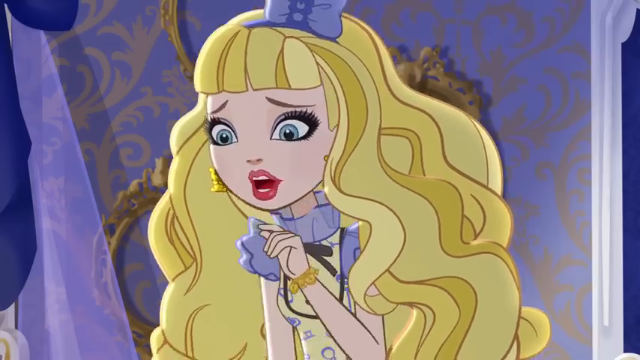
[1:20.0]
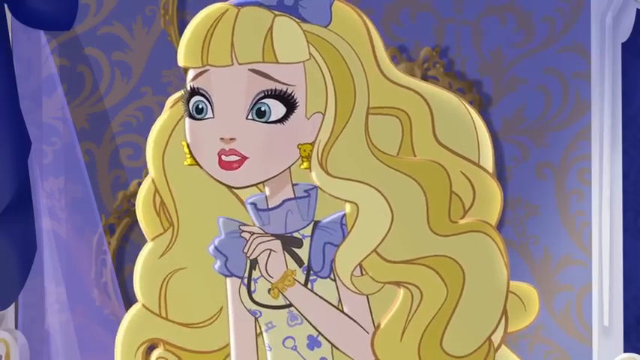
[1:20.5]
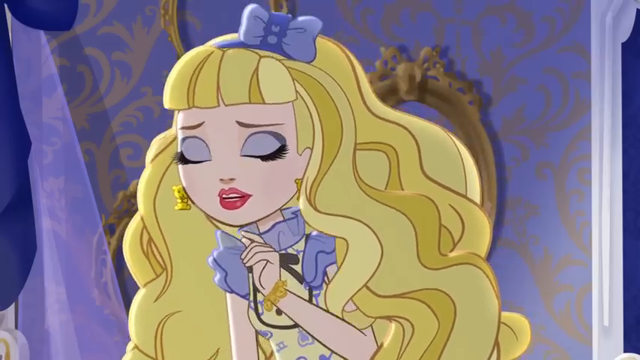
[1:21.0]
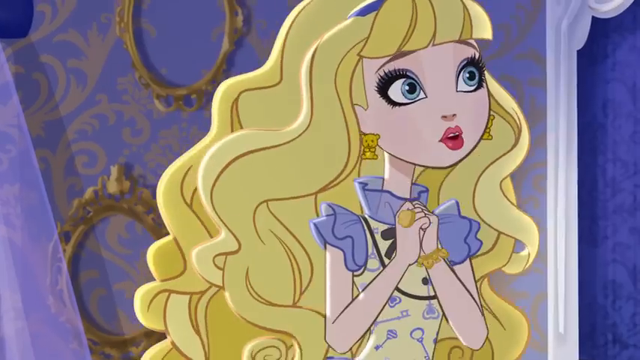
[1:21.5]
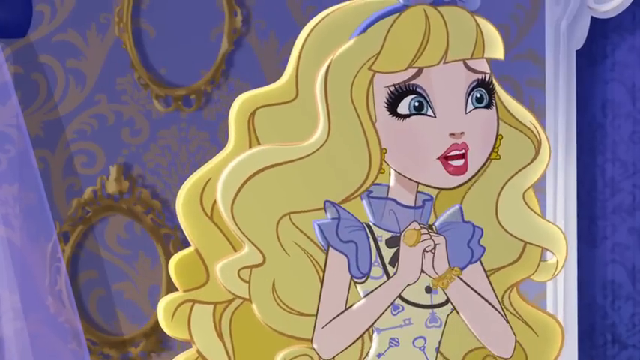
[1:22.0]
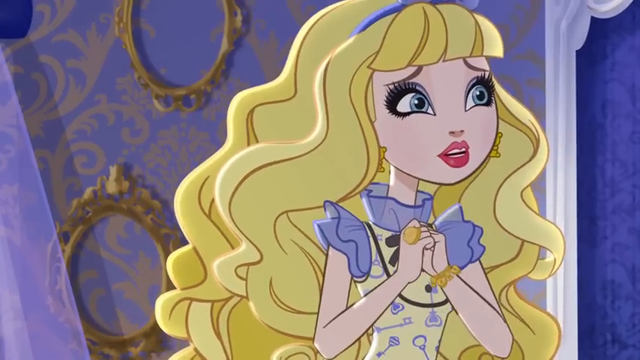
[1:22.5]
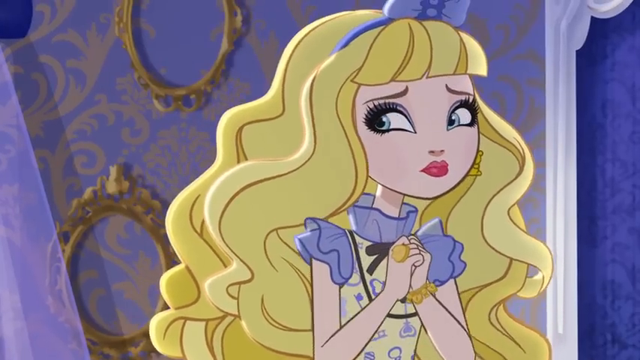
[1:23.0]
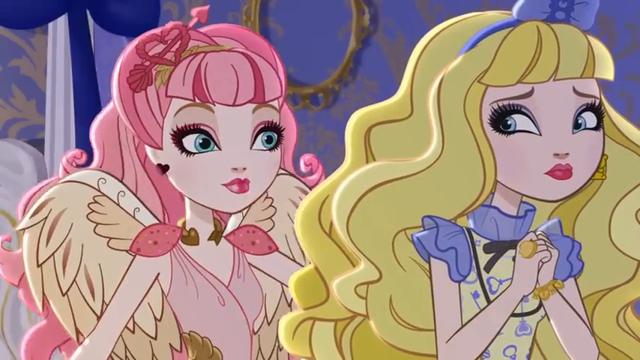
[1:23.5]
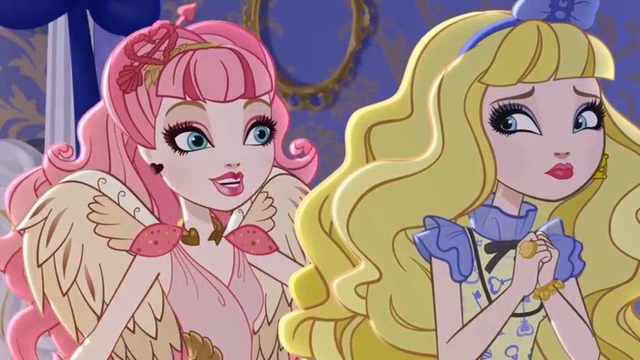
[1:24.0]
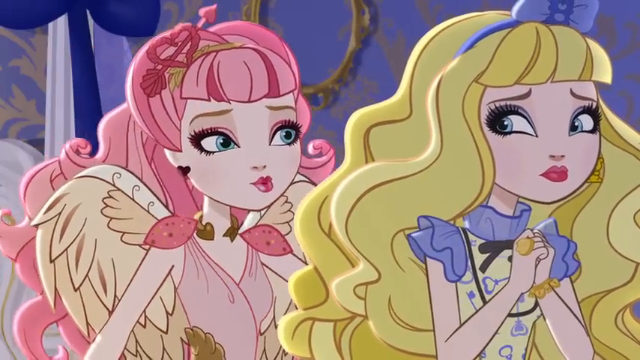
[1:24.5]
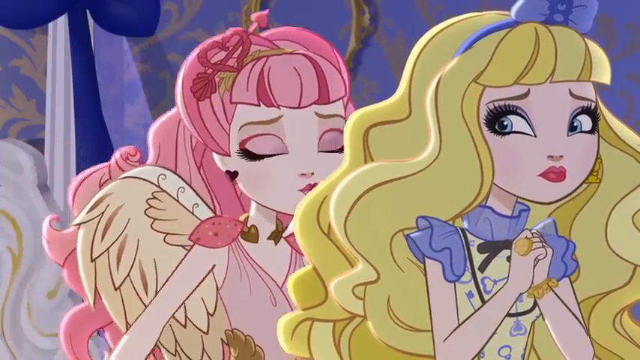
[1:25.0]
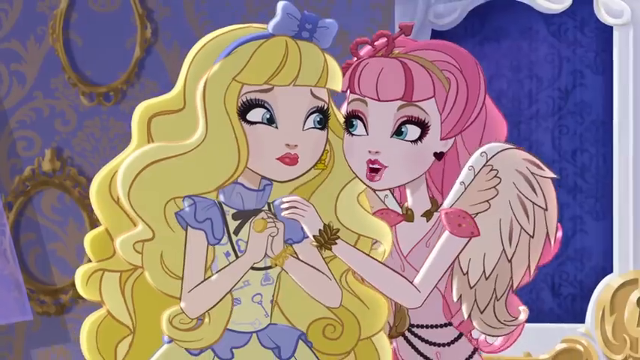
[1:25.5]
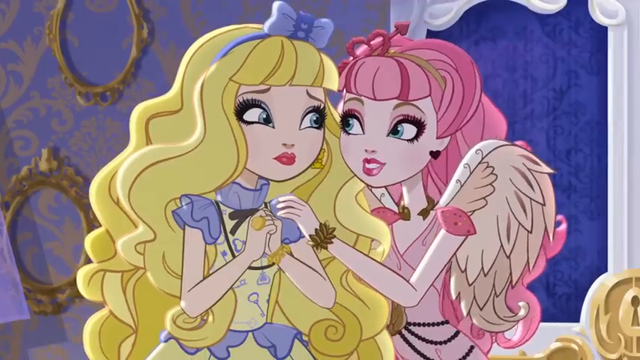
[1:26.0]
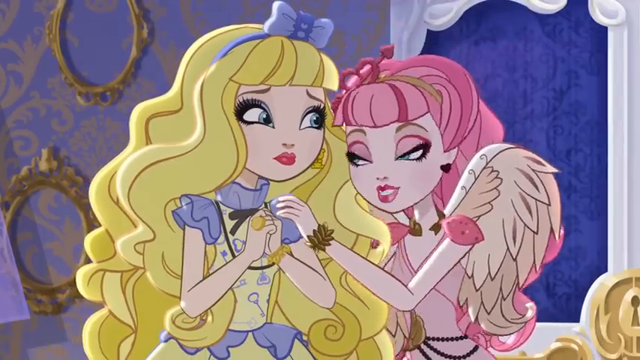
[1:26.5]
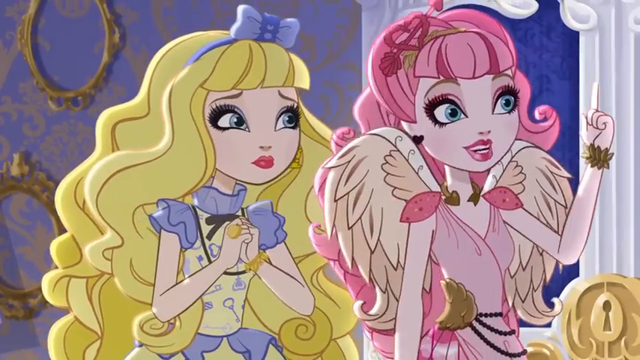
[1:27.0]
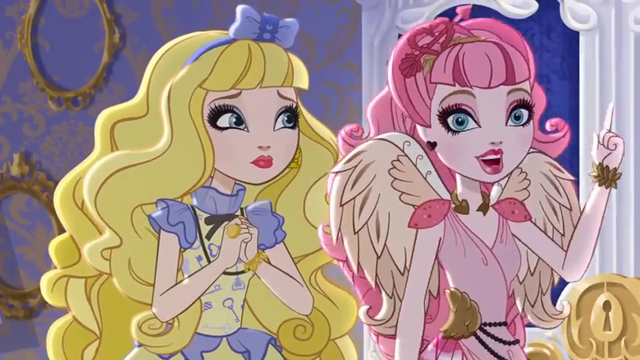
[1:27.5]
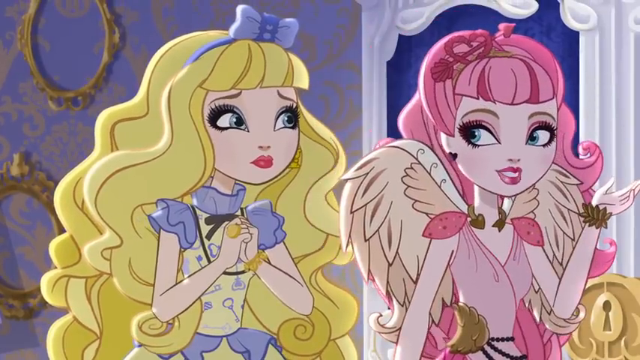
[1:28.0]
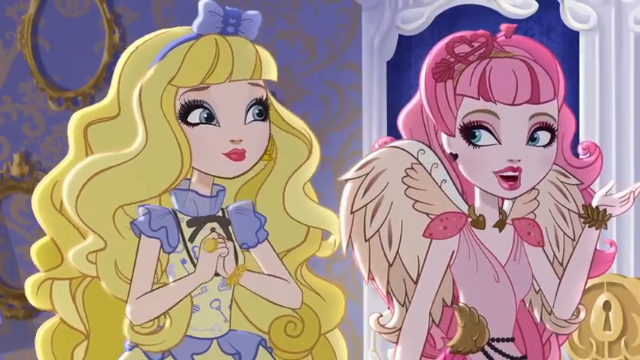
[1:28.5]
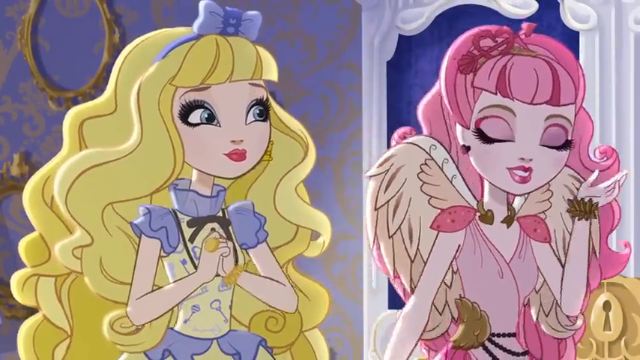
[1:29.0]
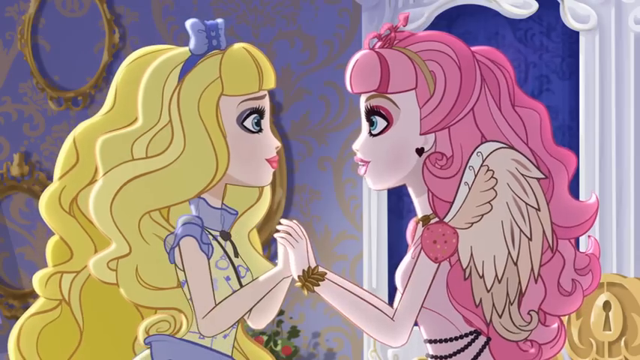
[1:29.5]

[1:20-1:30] The blonde princess seems to be talking with both her hands and her mouth; she looks surprised yet struggling. Her makeup is done well and her lipstick is perfect despite how much she has cried. It looks like she kind of wants to sing. The girl in pink then comes in around the side, extremely enthusiastic, seemingly also wanting to sing. They hold hands. The girl in pink may have some relation to Cupid.